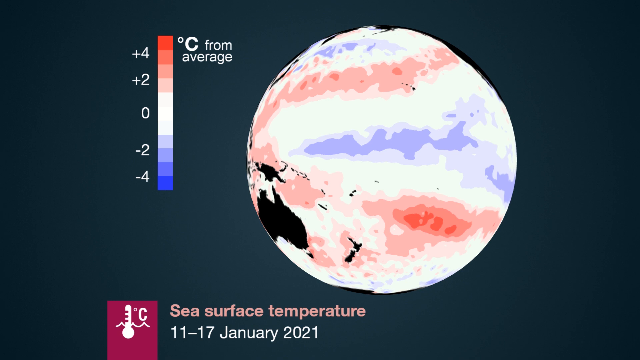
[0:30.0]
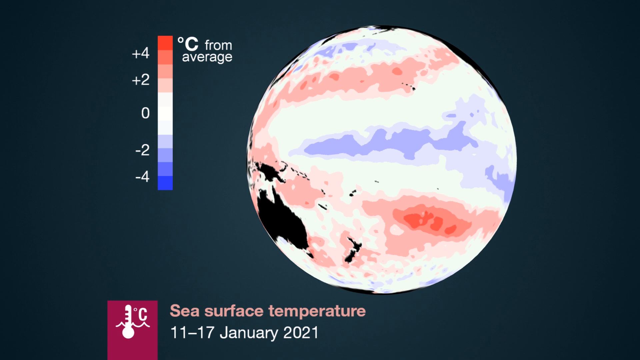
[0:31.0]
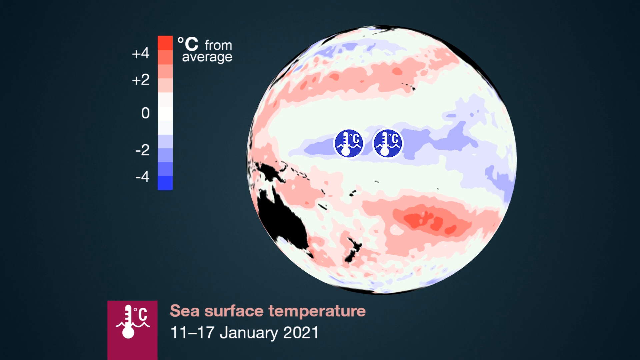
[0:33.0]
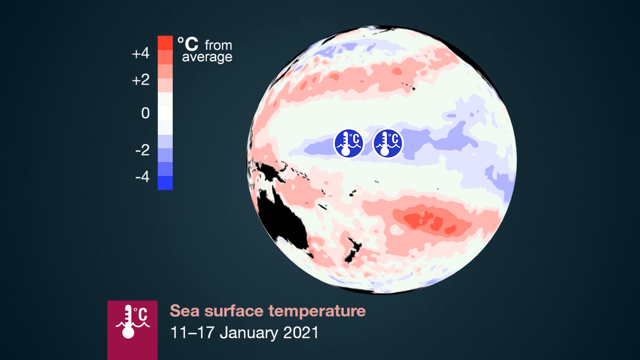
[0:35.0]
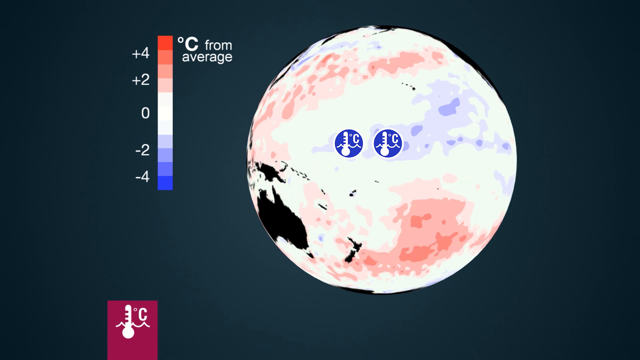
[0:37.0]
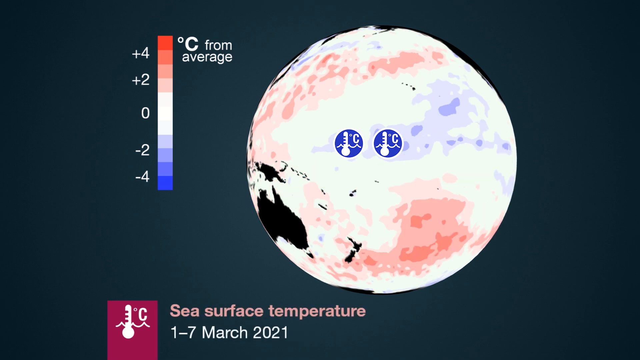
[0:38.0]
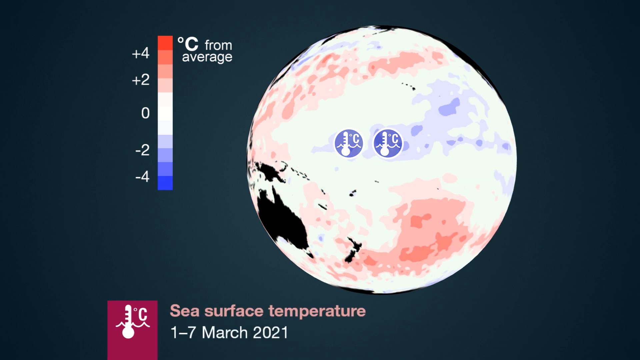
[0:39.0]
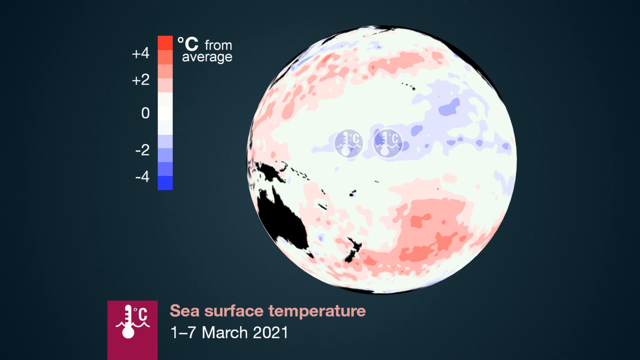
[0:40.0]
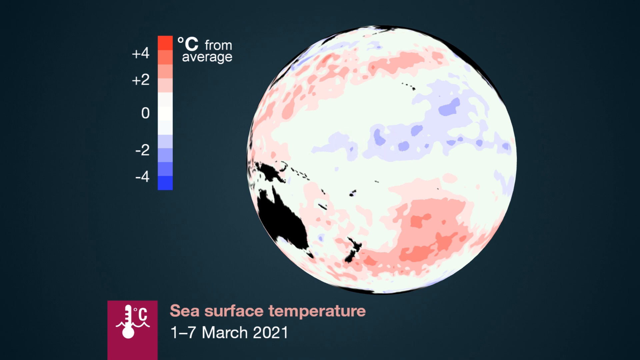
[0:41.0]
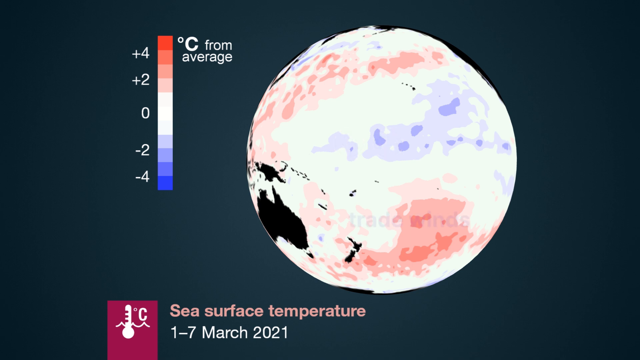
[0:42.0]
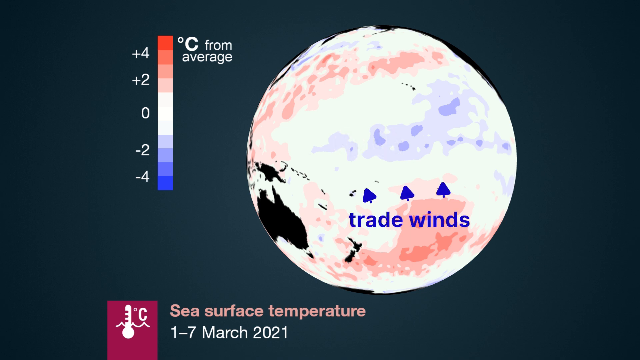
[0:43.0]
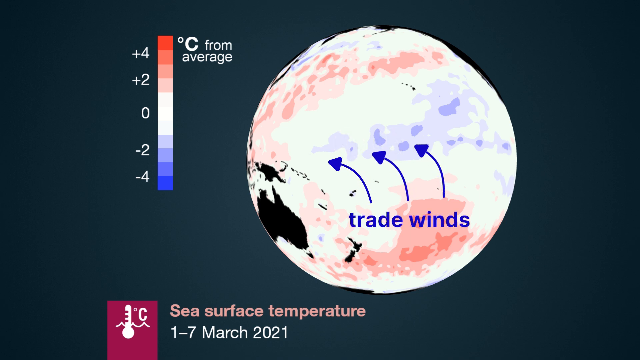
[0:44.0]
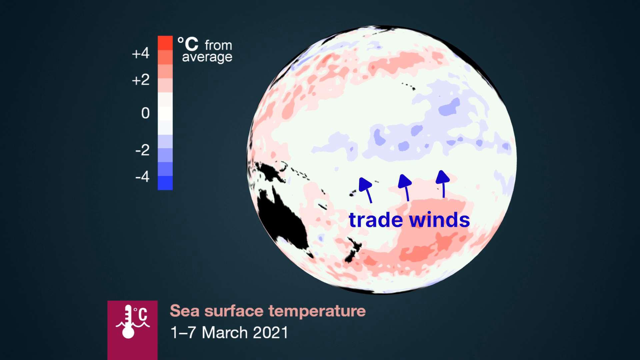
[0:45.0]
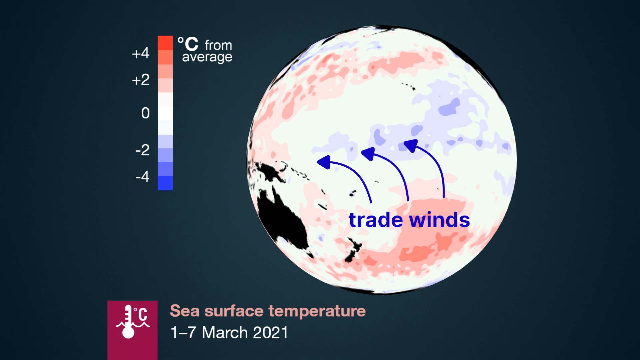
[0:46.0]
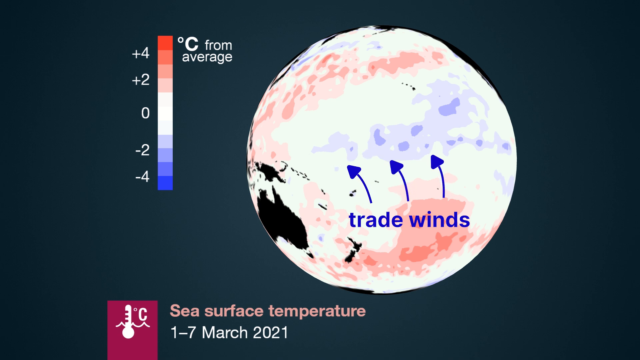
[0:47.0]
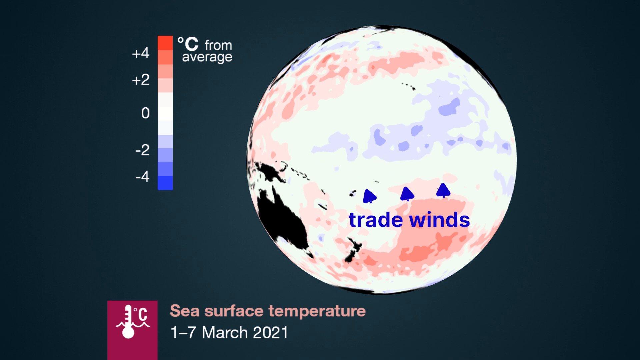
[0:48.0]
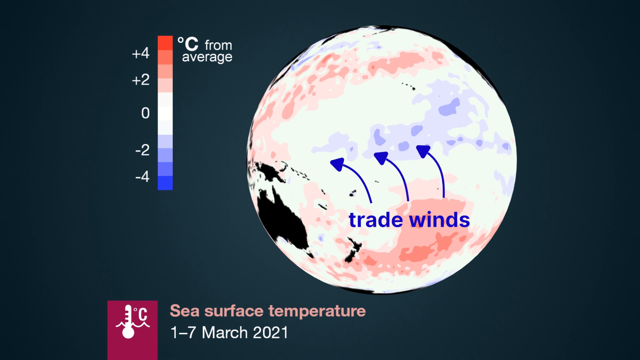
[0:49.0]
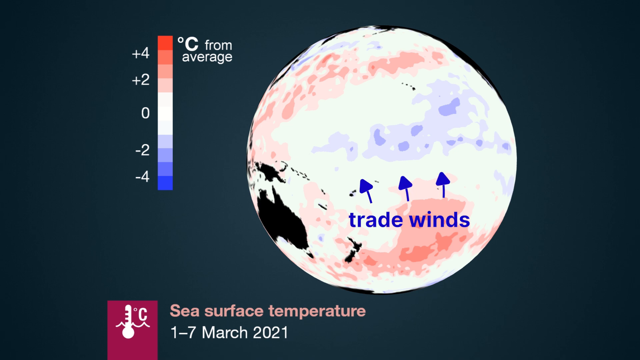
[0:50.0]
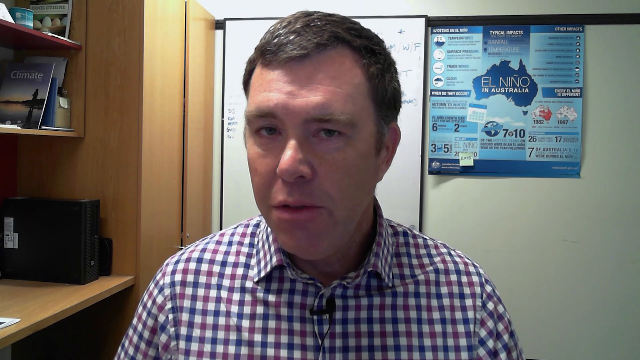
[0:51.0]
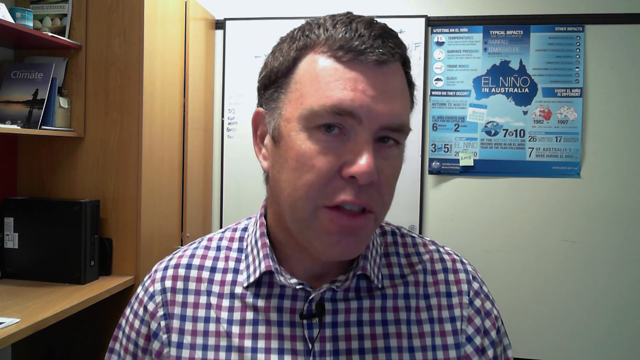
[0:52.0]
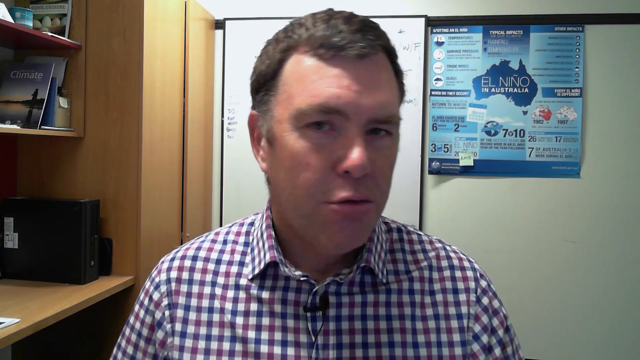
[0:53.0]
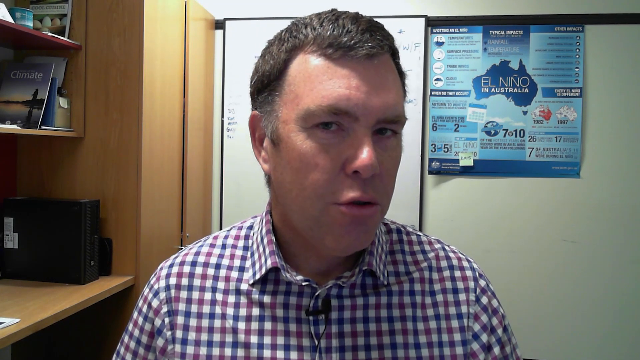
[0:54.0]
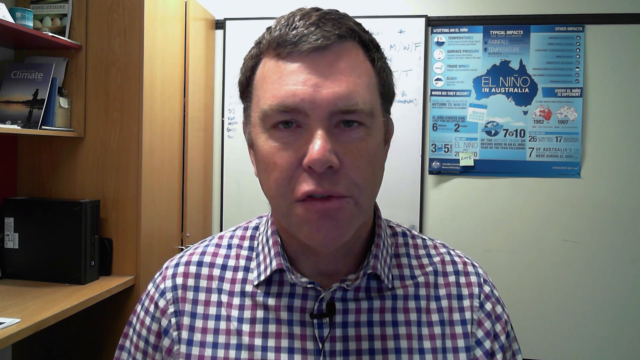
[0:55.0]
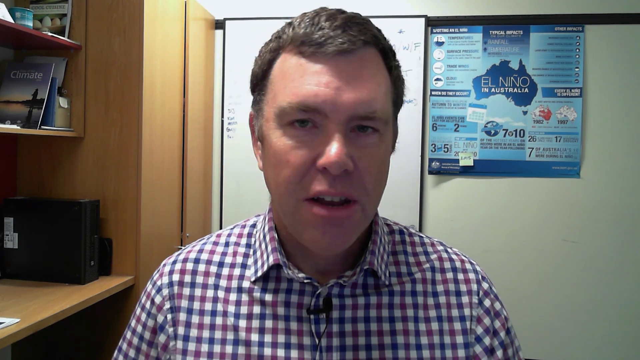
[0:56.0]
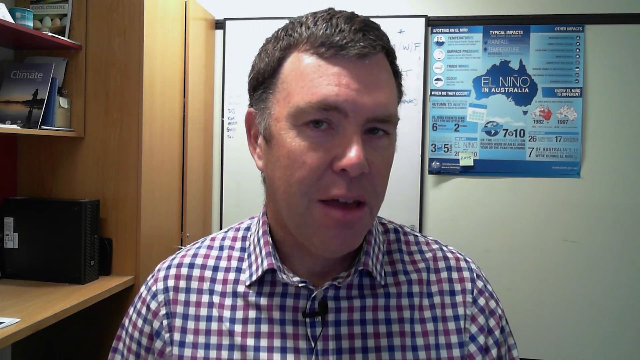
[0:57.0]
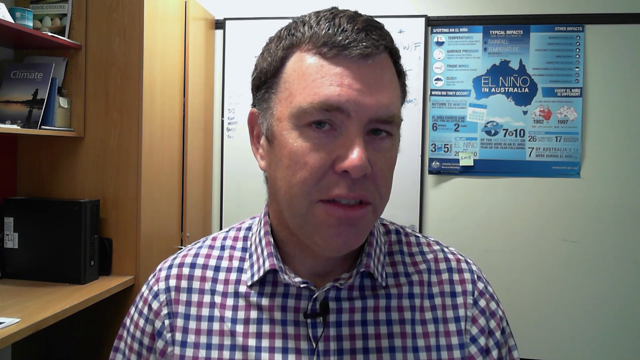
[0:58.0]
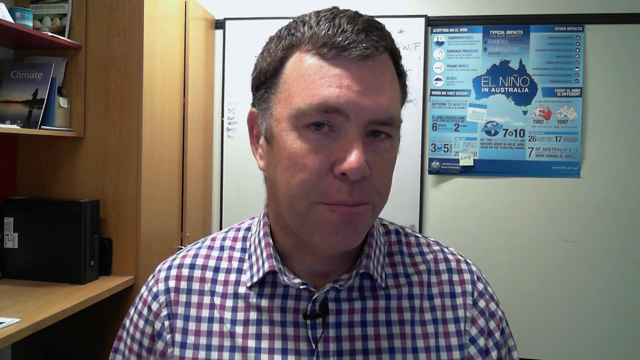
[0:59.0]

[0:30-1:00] A map or globe of the world shows sea surface temperatures, first for the 11th to the 17th of January 2021, with a scale running from minus 4 degrees C up to plus 4. Sea surface temperatures are shown for multiple different periods, for example the 1st to the 7th of March 2021. The temperature colouring is then removed from the globe and small arrows appear showing the trade winds. The video then transitions back to the doctor speaking to the camera with a microphone attached to his shirt. He is in his office, with bookshelves to his left, a brown cabinet, what appears to be a whiteboard behind him, and an "El Nino in Australia" poster stuck to the wall behind him to the right.